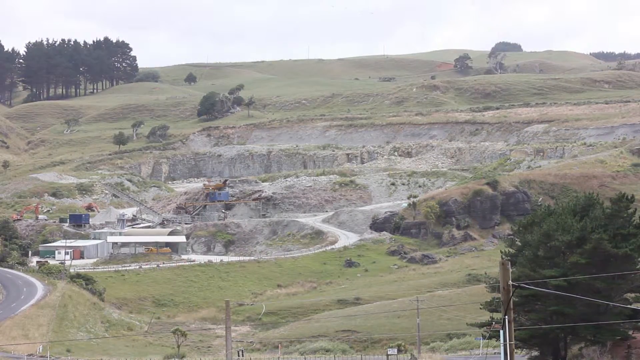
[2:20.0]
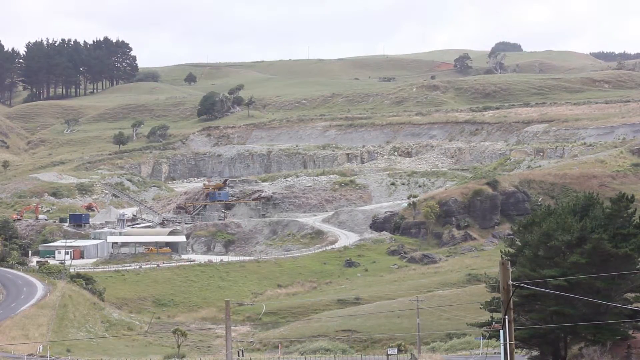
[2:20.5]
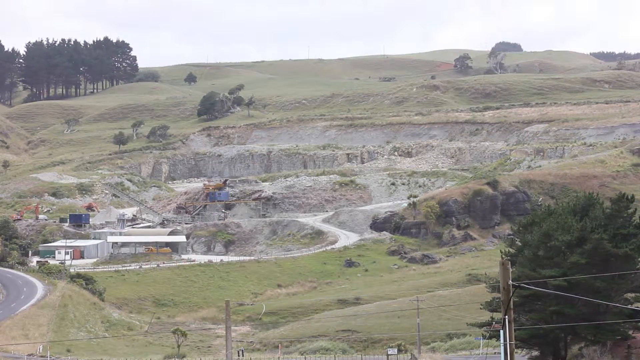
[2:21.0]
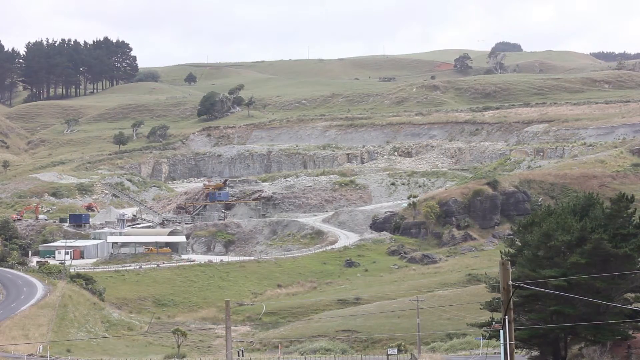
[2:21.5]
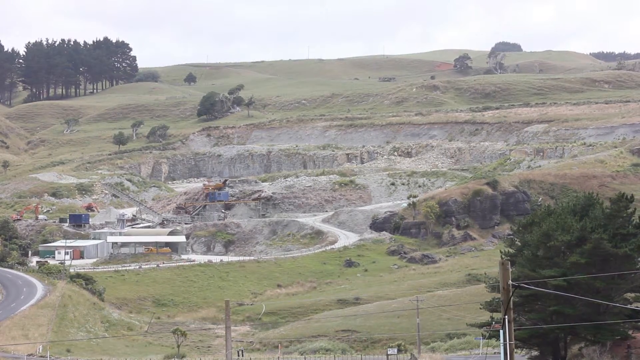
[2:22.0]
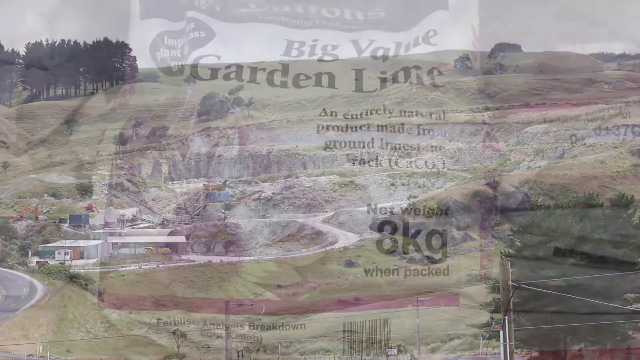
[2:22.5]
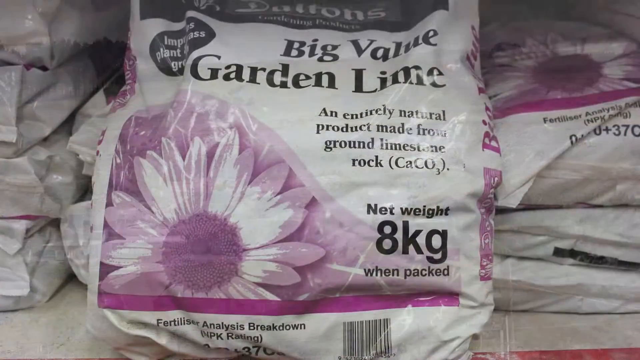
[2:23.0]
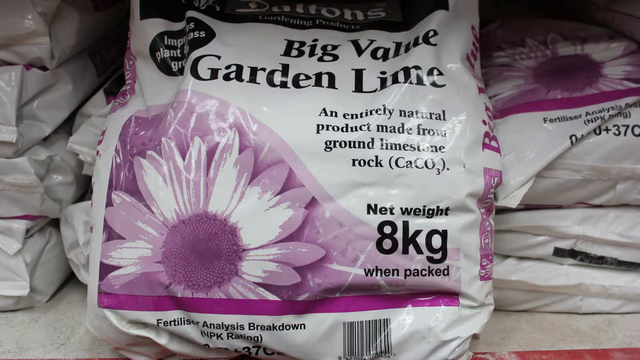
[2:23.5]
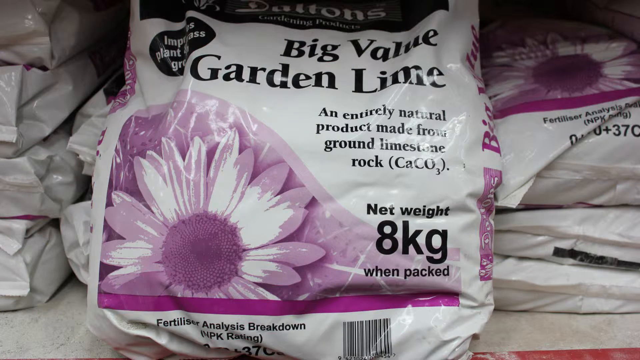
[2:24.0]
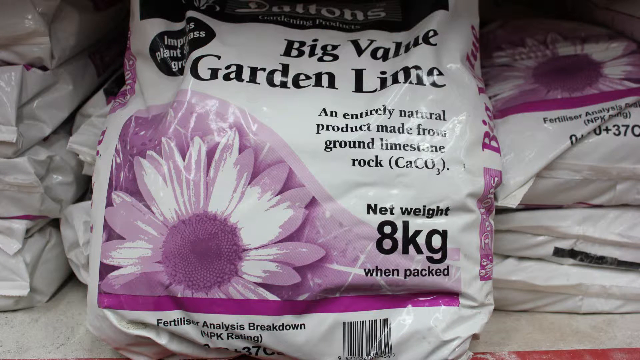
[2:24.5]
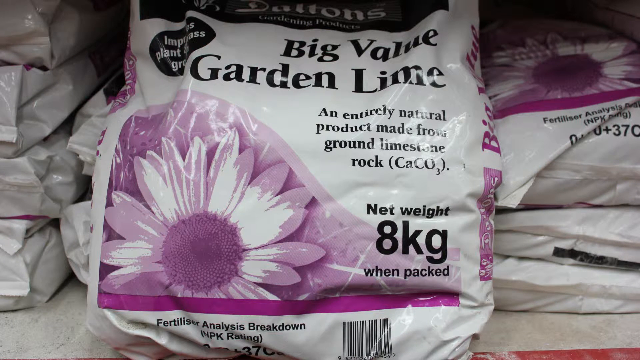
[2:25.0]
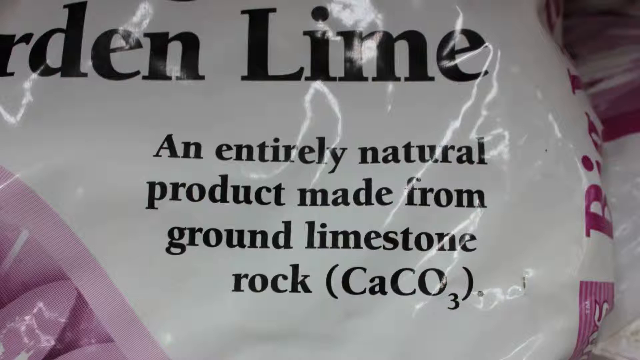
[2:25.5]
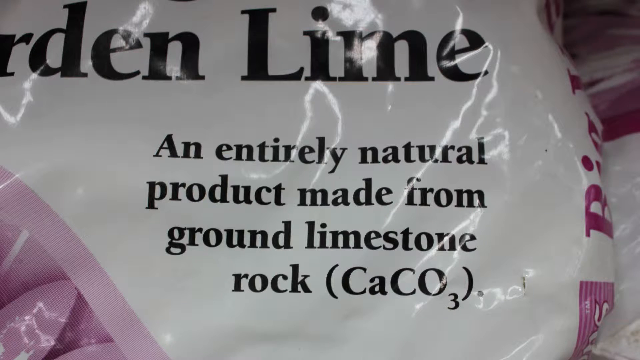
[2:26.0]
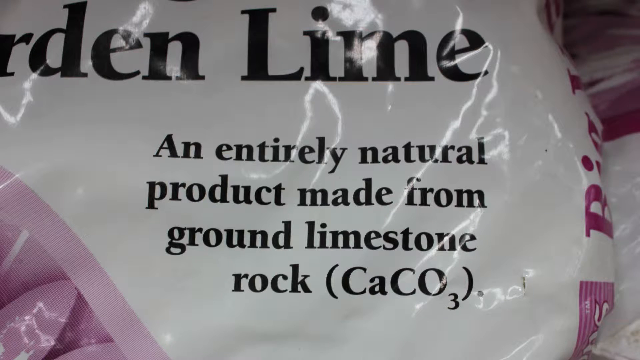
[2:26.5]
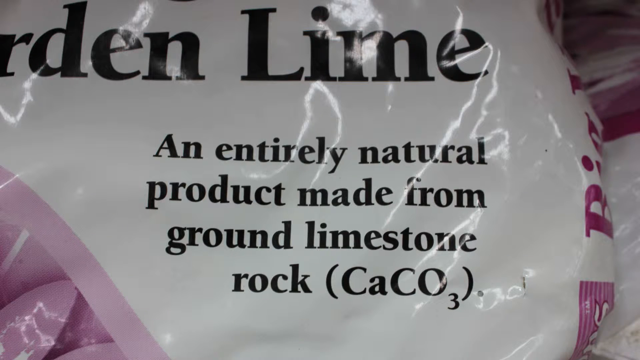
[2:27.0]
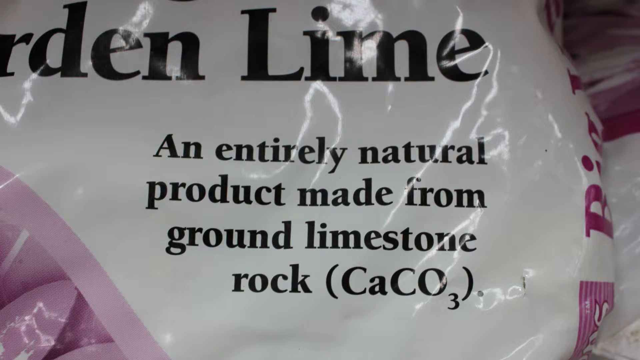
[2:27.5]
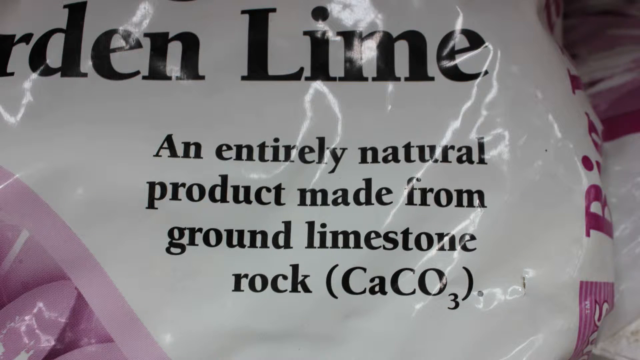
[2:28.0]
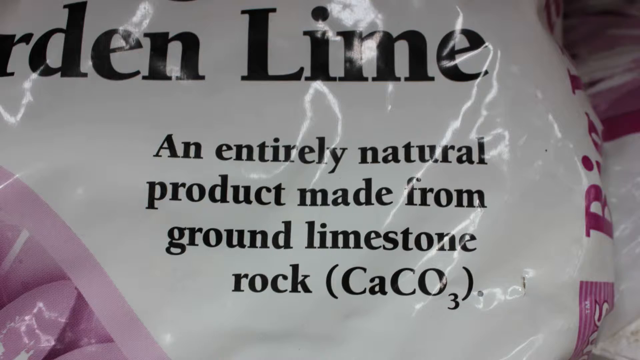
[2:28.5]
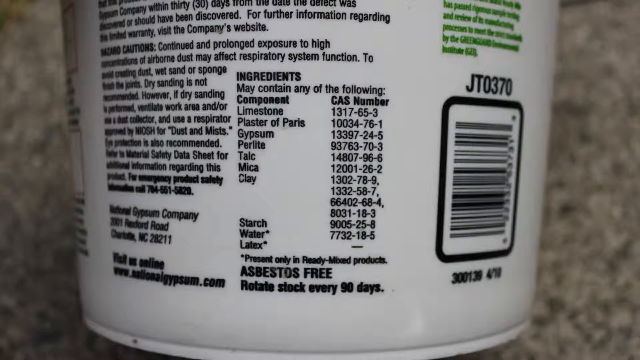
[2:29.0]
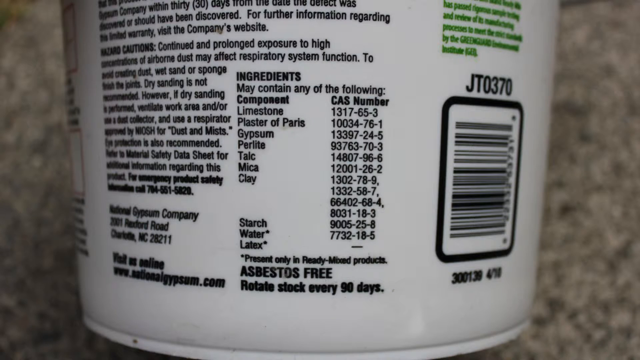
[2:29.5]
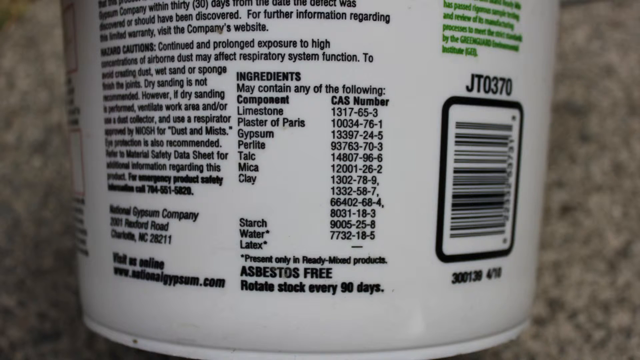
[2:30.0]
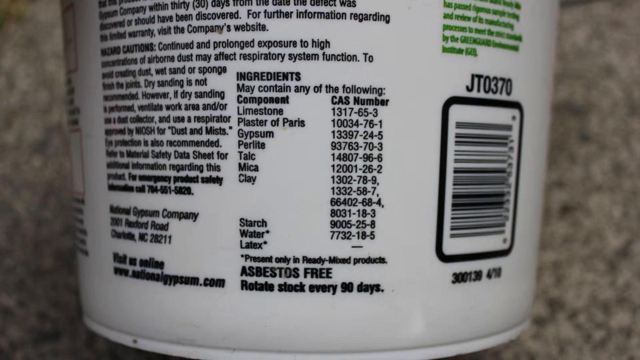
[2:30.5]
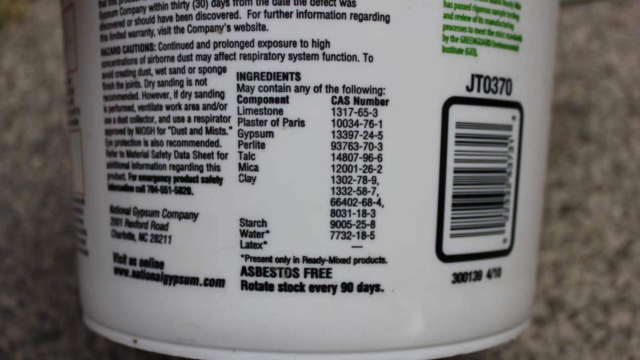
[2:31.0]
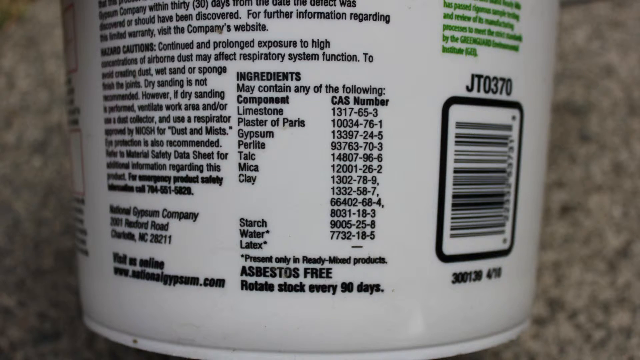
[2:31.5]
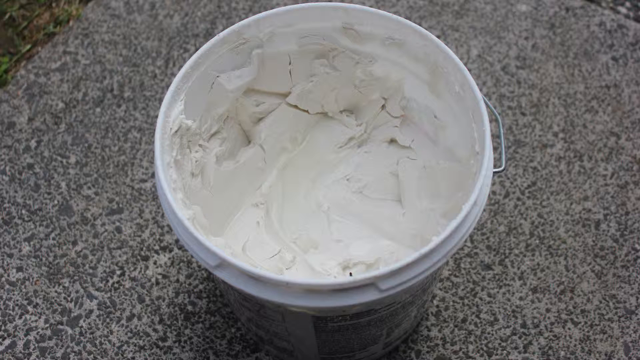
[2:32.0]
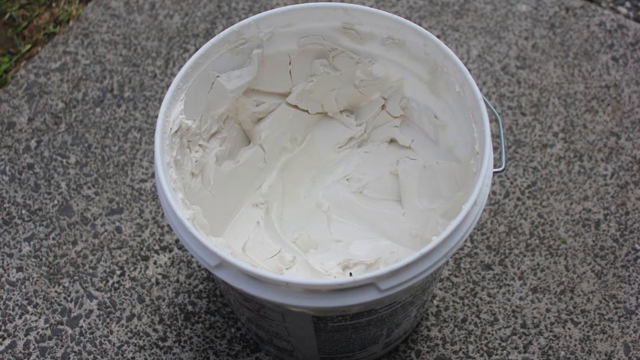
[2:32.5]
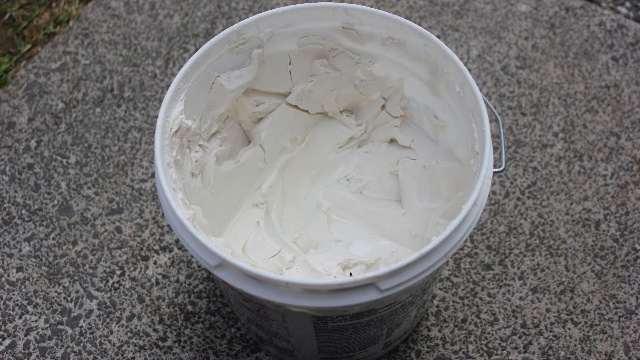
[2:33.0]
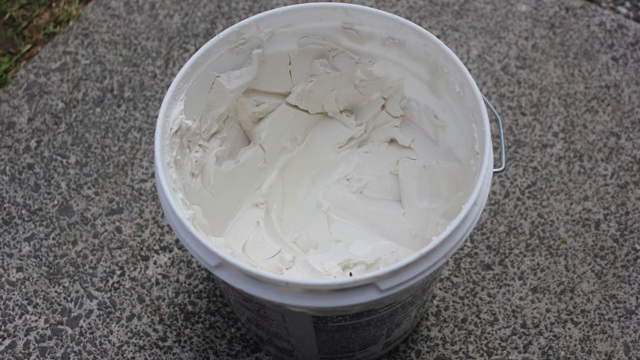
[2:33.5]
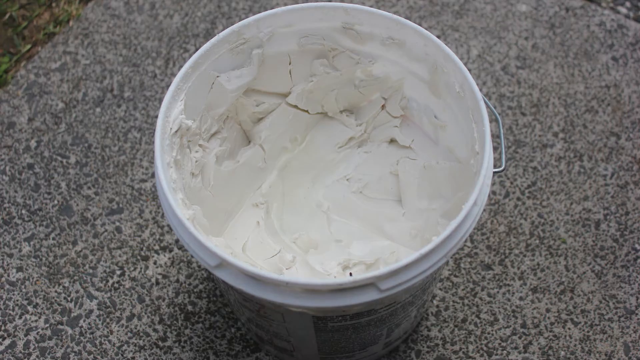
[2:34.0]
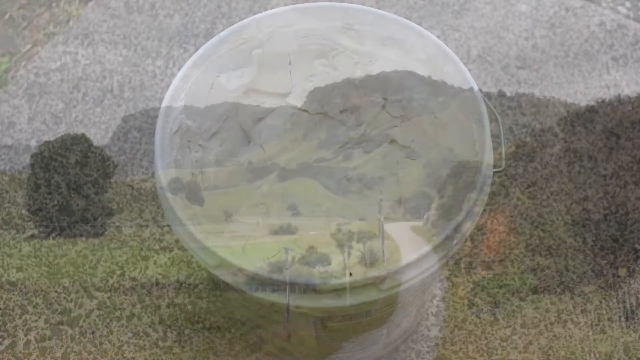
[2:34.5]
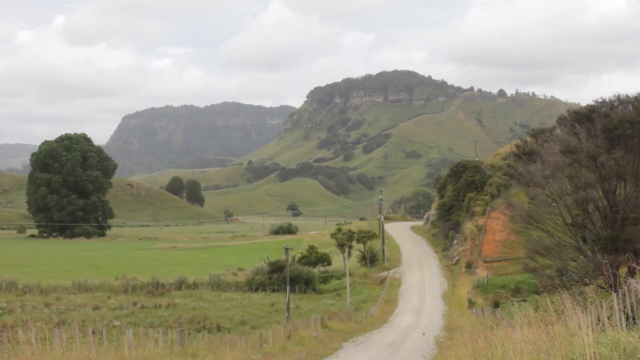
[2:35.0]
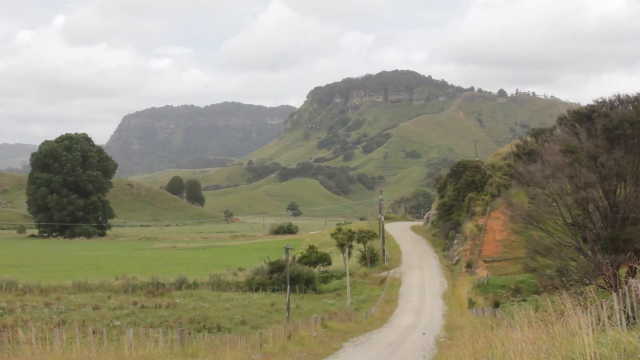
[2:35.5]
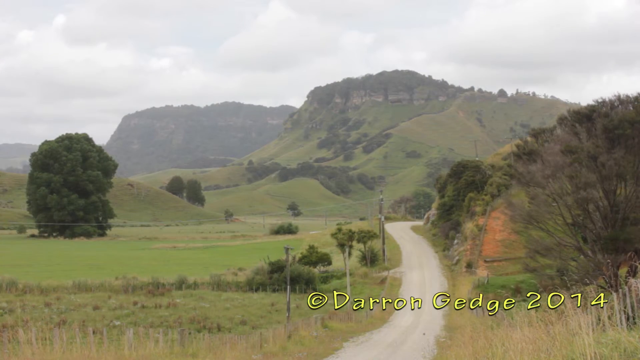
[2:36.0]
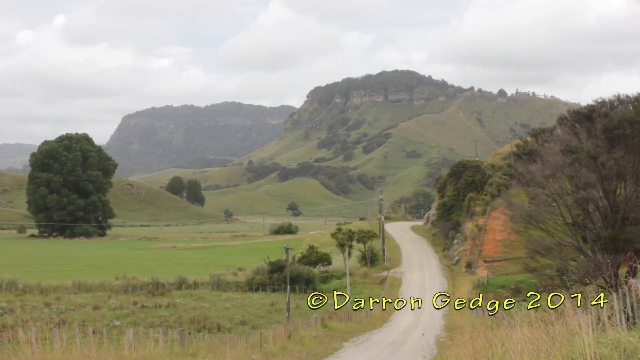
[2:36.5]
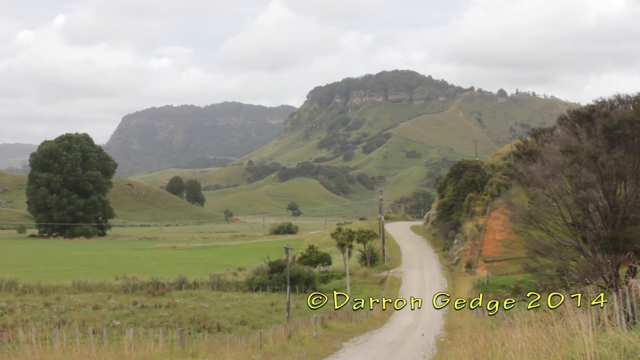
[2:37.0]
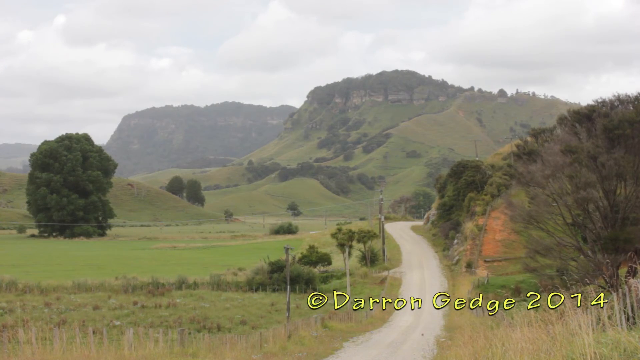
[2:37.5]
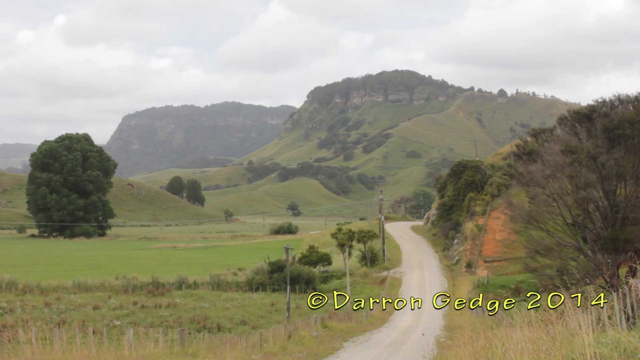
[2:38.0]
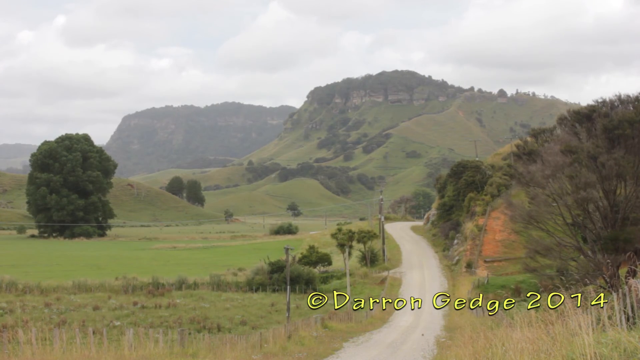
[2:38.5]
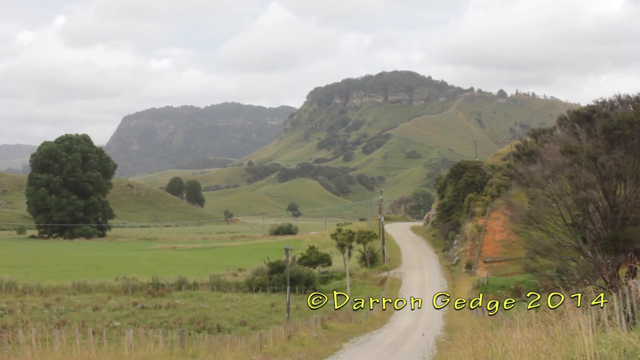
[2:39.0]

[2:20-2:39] Several roads sort of snake up the cliff side, up the side of the green hilly area. It looks like some excavation was done: the overall height difference isn't much, but the number of roads carved into the ground suggests people may have been digging here, perhaps for fossils or other materials. The view then switches to a bag, possibly a gardening bag, which reads "big value garden line, a entirely natural product made from ground limestone rock".